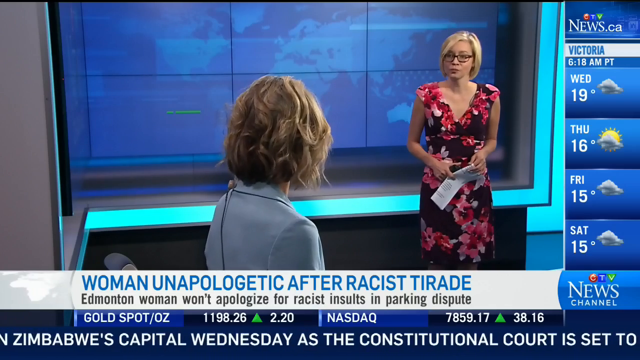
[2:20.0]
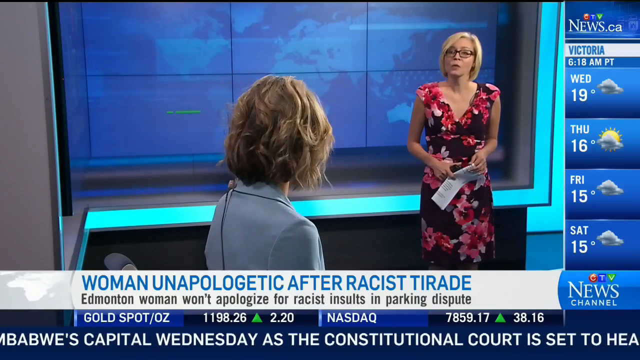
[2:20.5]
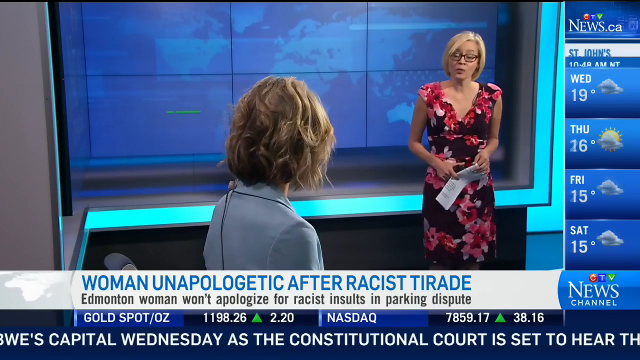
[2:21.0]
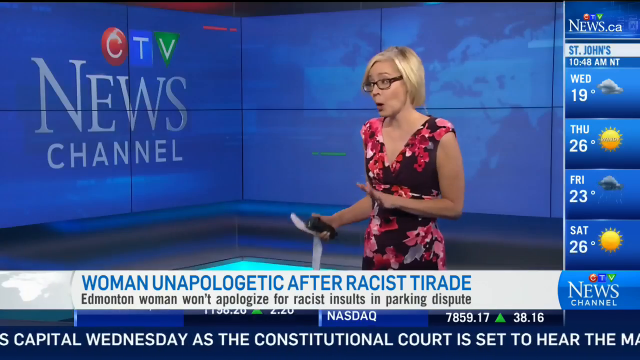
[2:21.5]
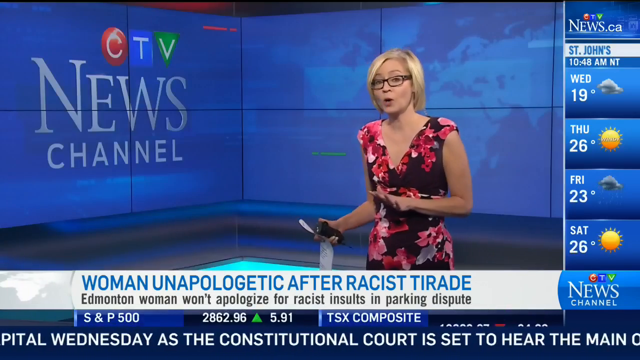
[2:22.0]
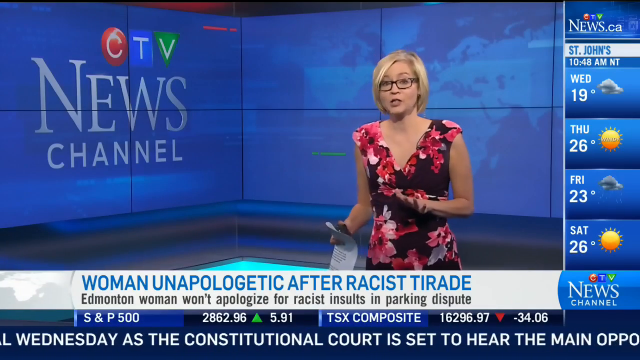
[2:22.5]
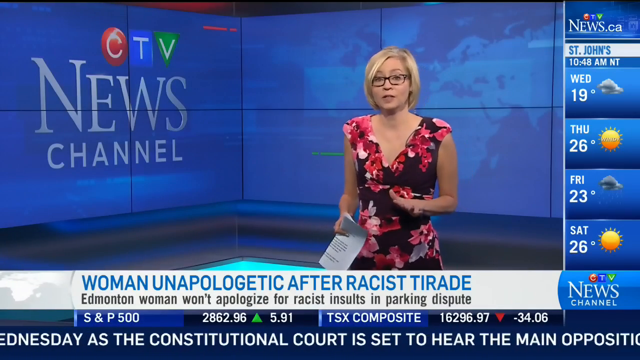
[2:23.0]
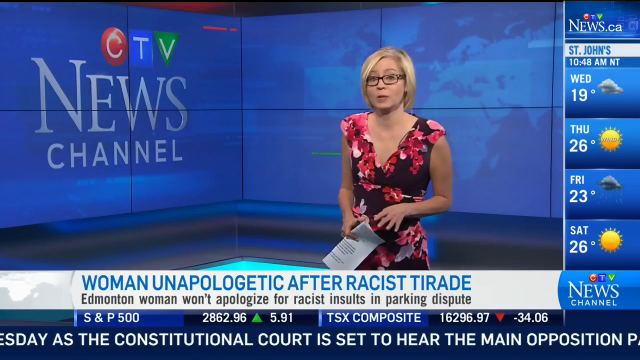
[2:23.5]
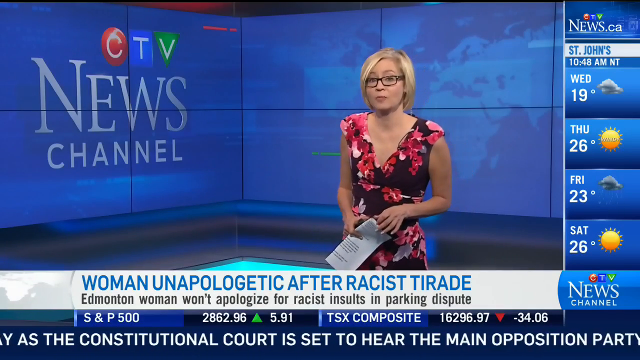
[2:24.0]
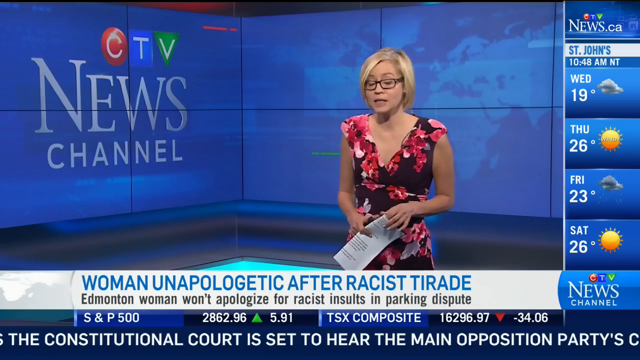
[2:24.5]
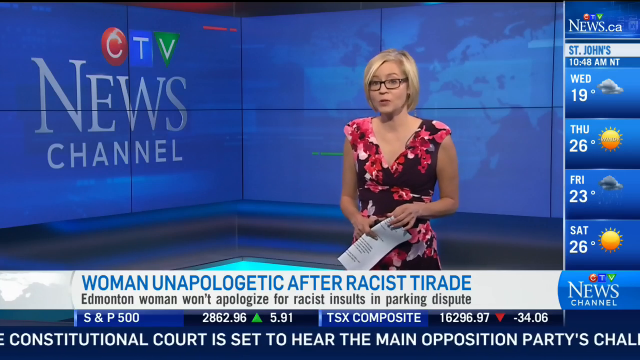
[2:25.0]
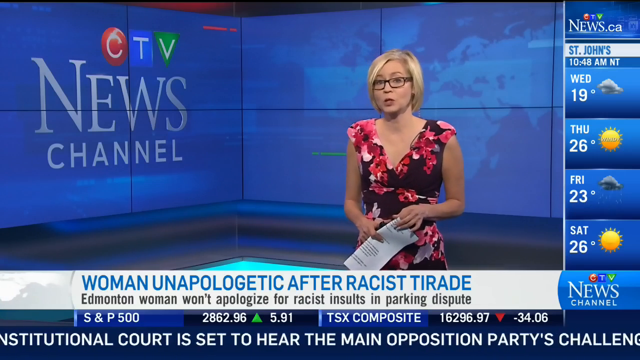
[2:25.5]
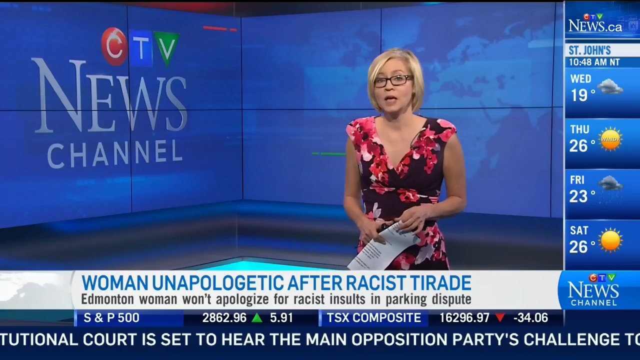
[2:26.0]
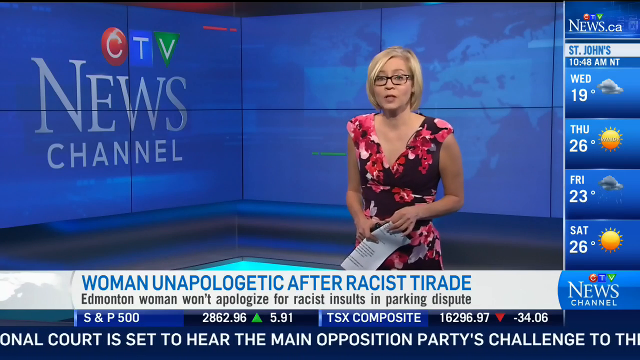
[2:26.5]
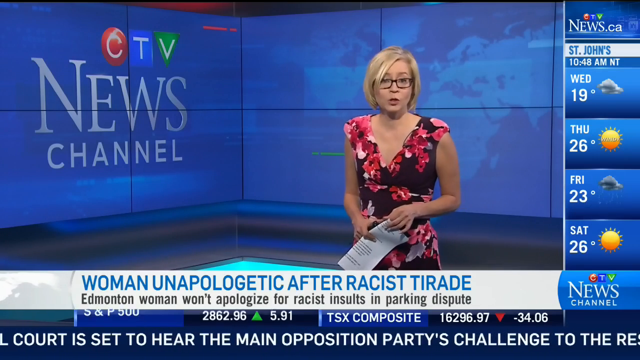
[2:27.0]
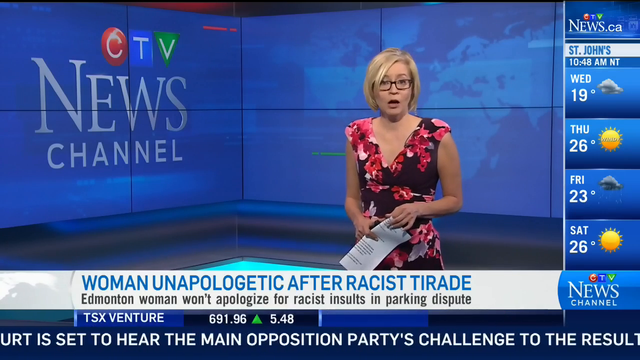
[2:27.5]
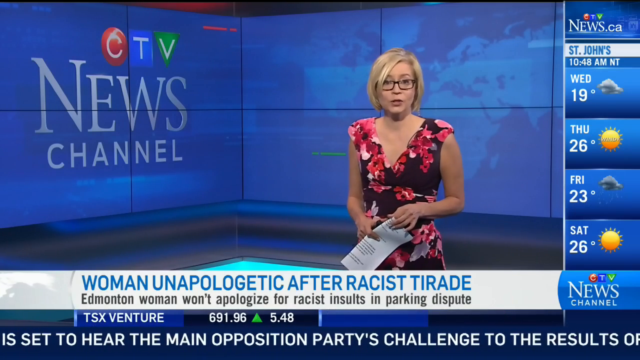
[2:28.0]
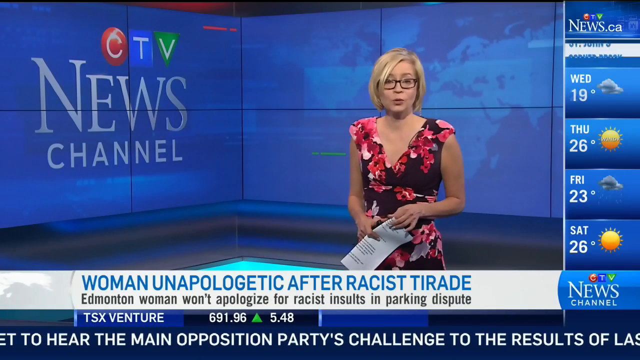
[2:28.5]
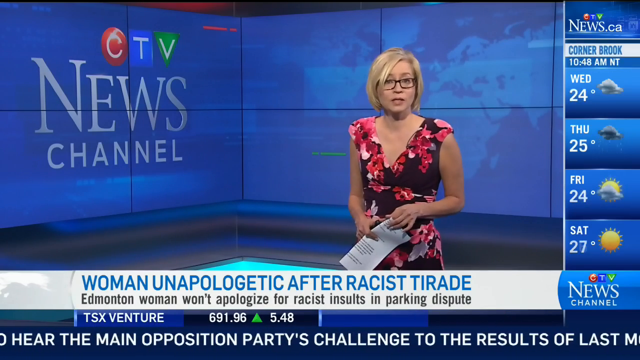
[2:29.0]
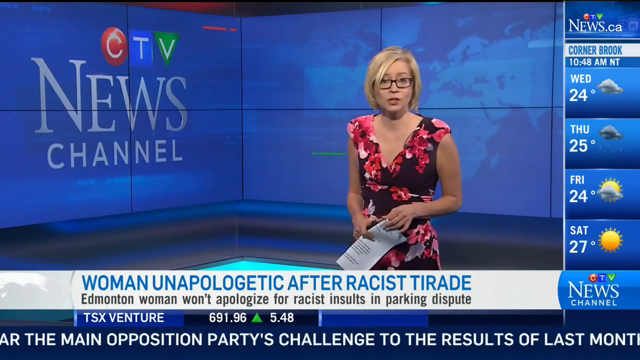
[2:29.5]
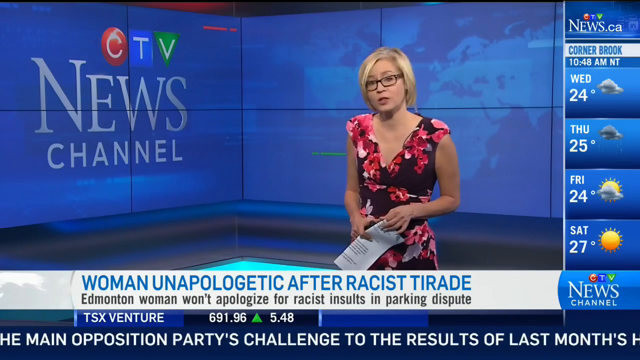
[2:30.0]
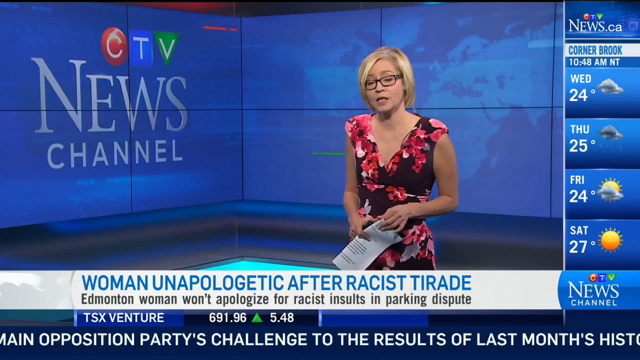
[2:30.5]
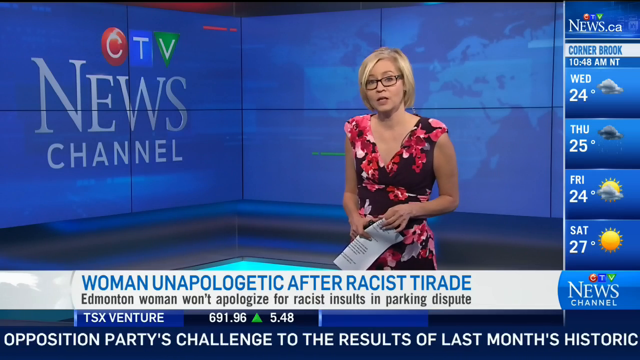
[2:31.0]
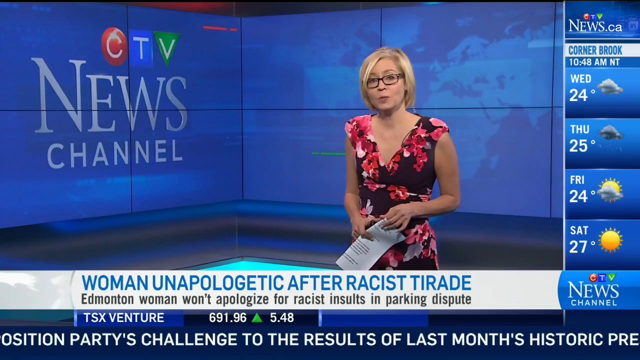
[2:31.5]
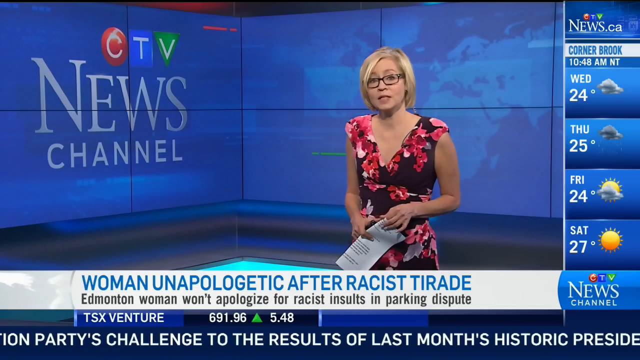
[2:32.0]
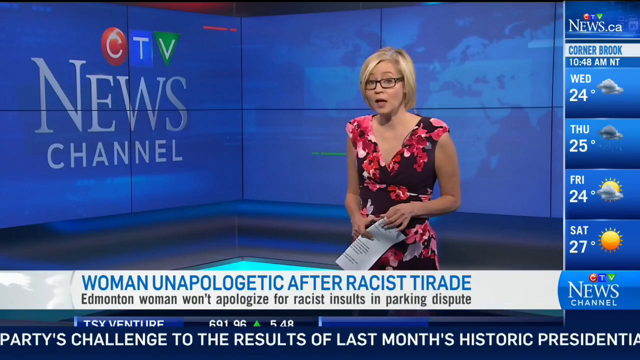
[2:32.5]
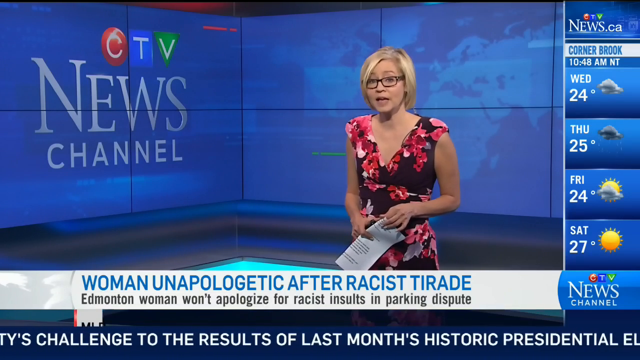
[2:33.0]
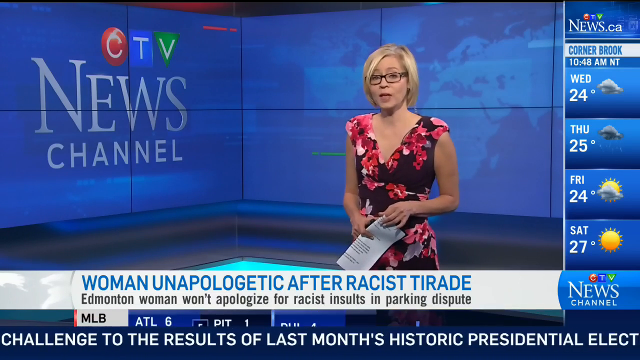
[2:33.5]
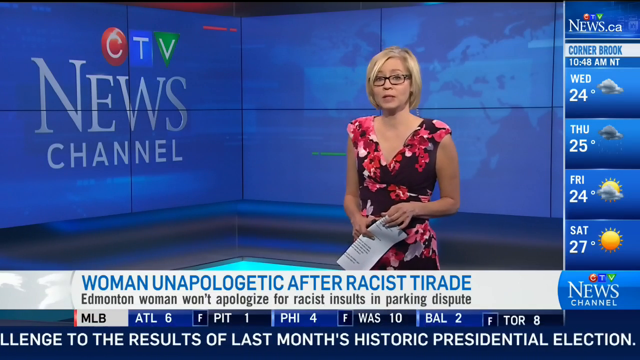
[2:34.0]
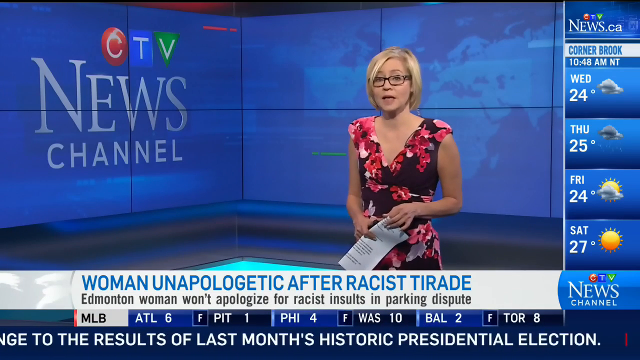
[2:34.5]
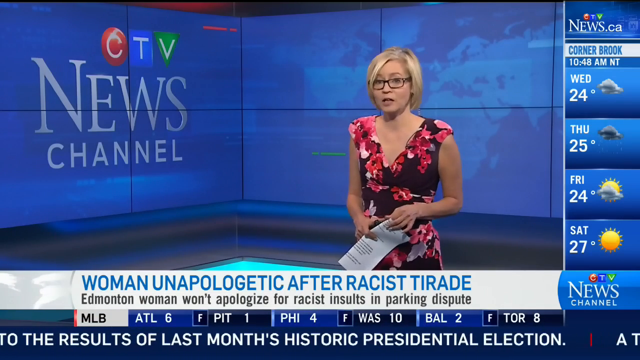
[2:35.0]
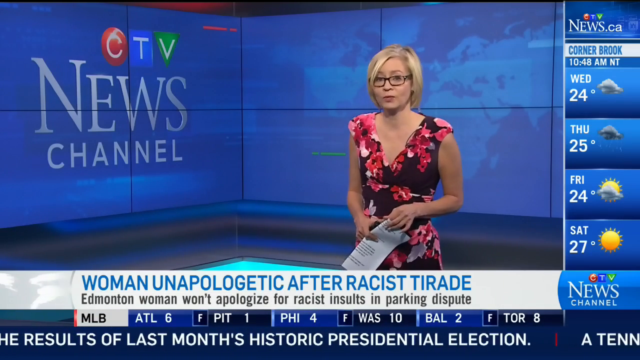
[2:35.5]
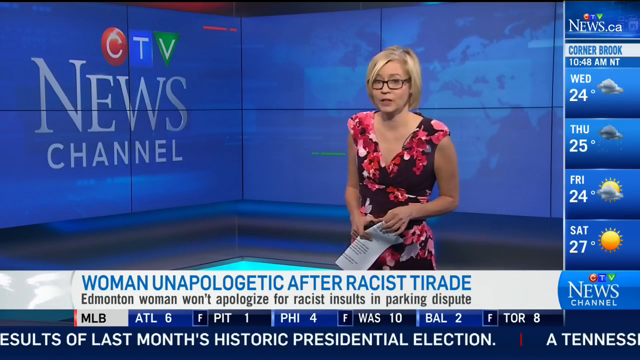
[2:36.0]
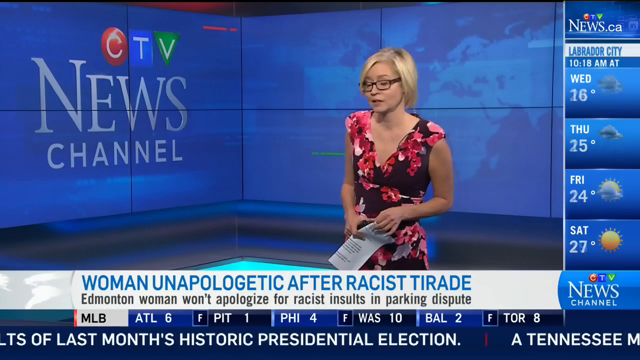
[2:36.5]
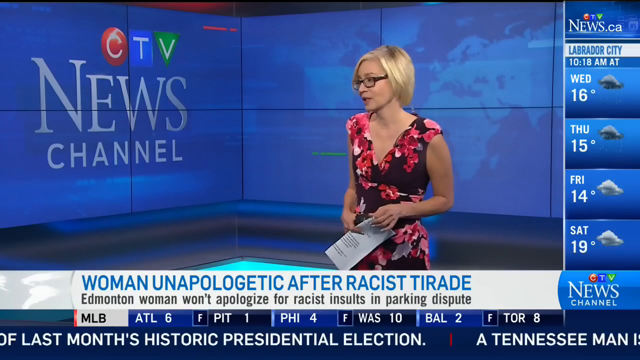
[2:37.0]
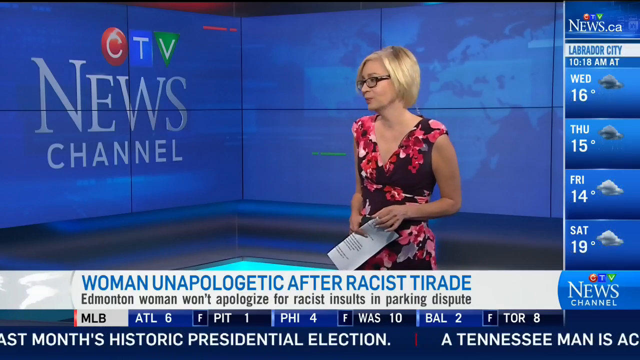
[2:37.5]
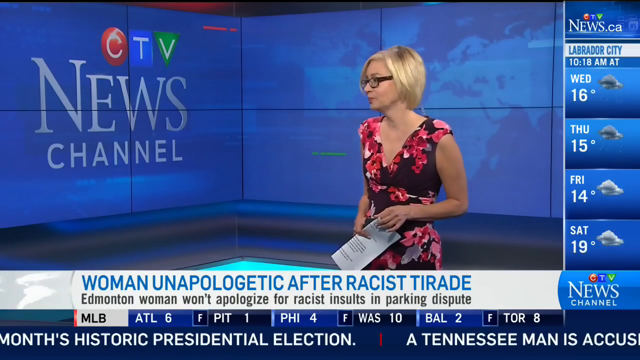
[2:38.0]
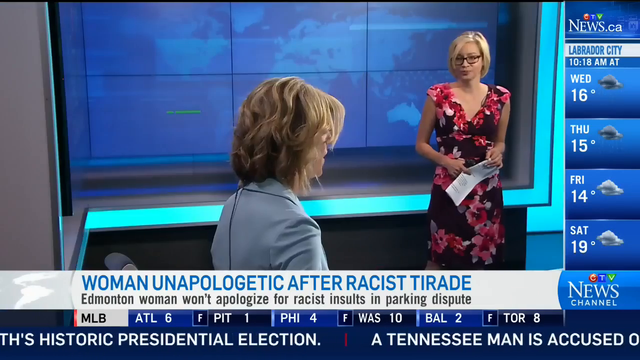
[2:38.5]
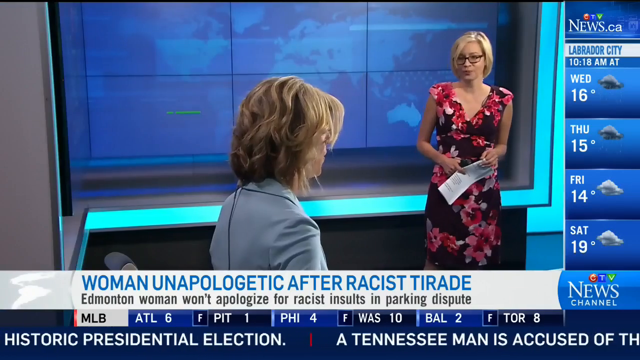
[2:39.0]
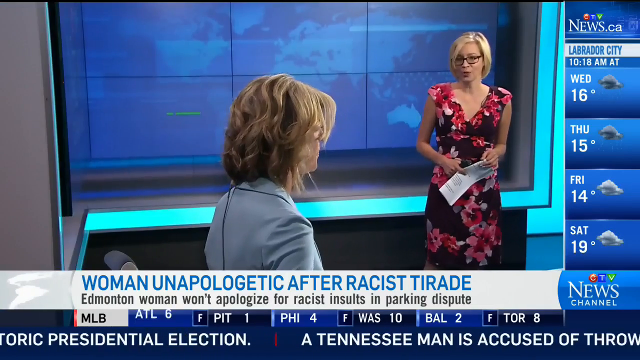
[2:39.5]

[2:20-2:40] In the newsroom, the presenter in the long flower-design dress still holds the document and looks at the other co-host, who is seen from the back of her head. A wire is kind of draped down her back, and screen panels of what looks to be the world are faintly visible in the background. The shot returns to the standing presenter, who seems to be talking and is the main host at the moment, moving her head back and forth. Baseball information is shown below, including the Atlanta score and the Philadelphia score. The video then returns to the original anchor, who is talking, her blazer open a little over a white shirt, with a short haircut; she is sitting across from the standing host. The standing host is apparently named Erin Paul.